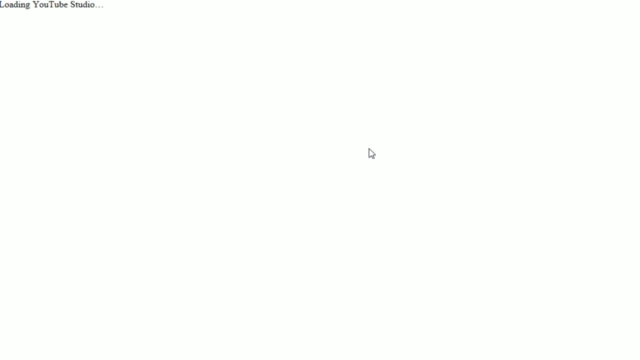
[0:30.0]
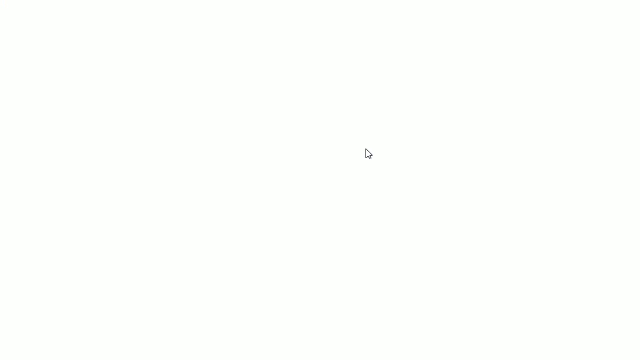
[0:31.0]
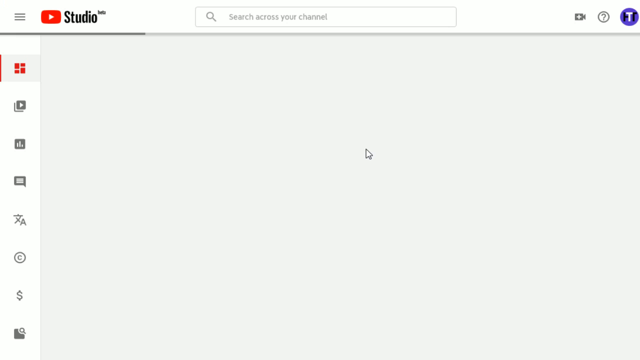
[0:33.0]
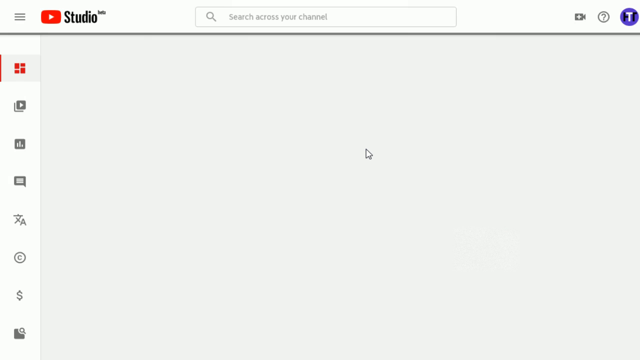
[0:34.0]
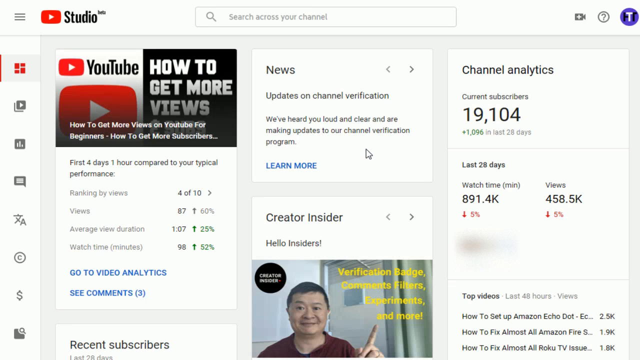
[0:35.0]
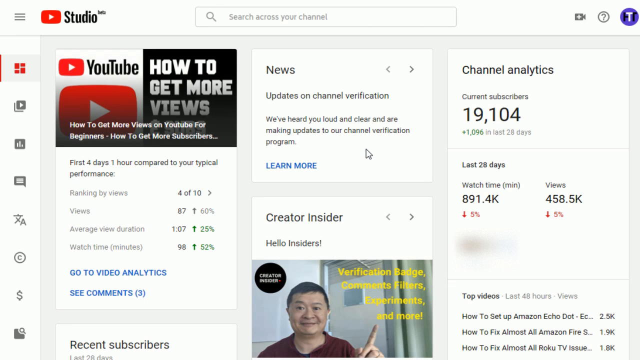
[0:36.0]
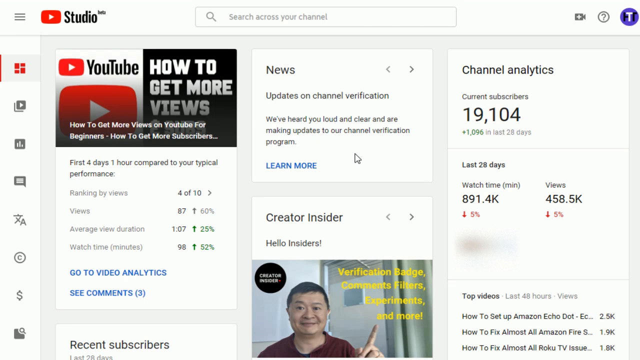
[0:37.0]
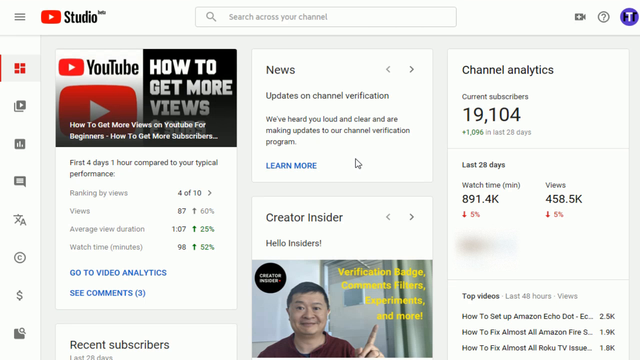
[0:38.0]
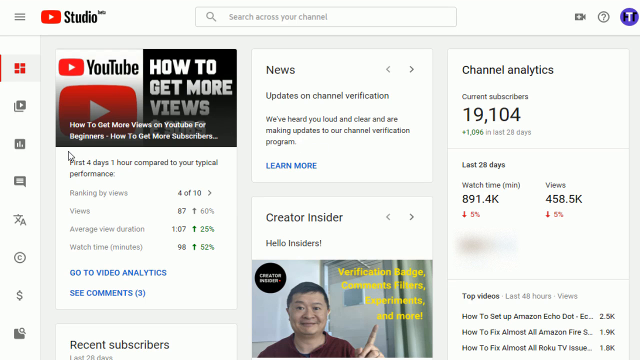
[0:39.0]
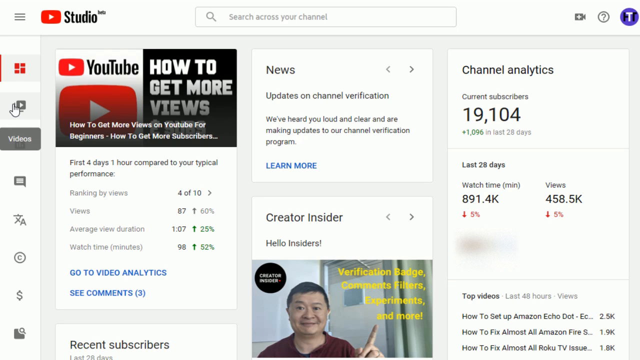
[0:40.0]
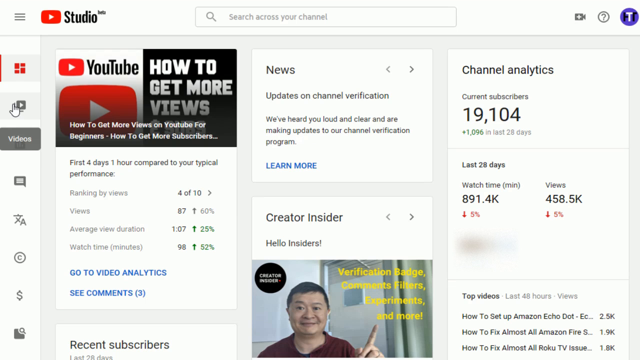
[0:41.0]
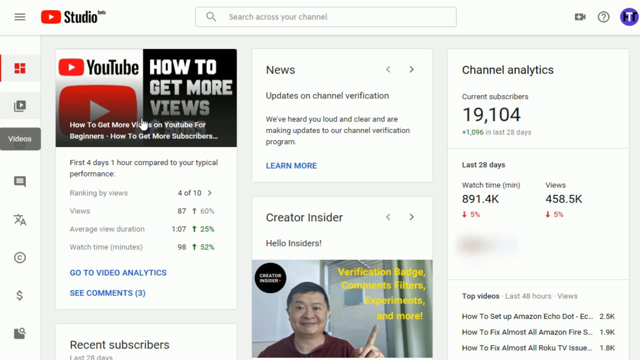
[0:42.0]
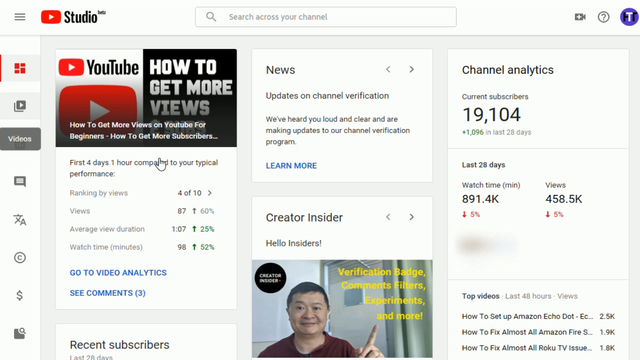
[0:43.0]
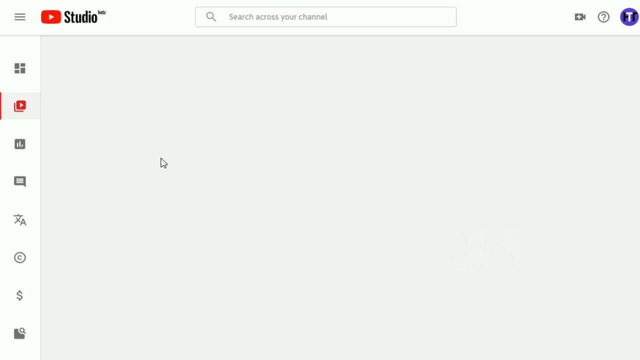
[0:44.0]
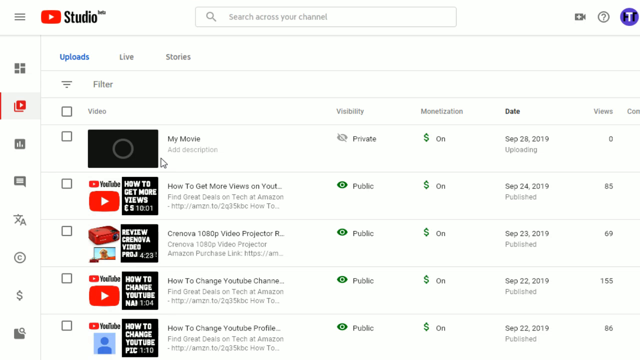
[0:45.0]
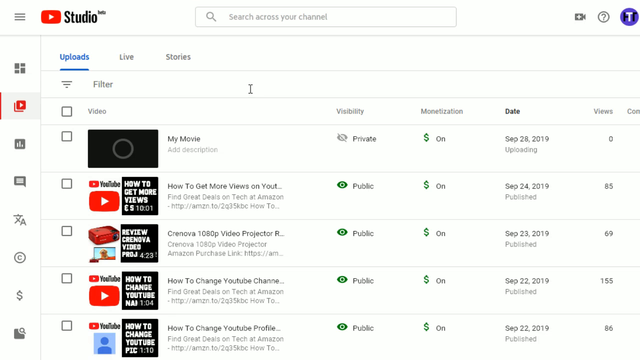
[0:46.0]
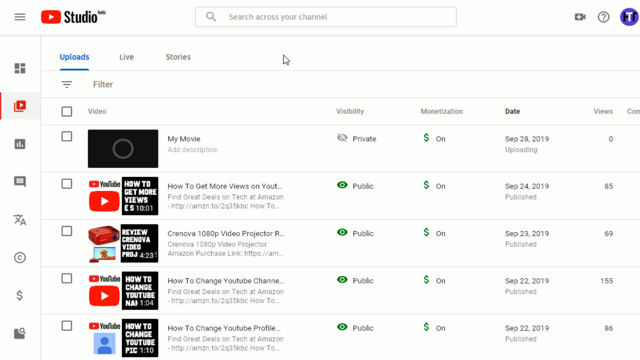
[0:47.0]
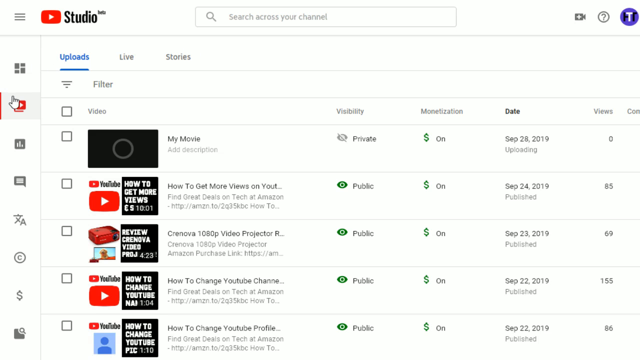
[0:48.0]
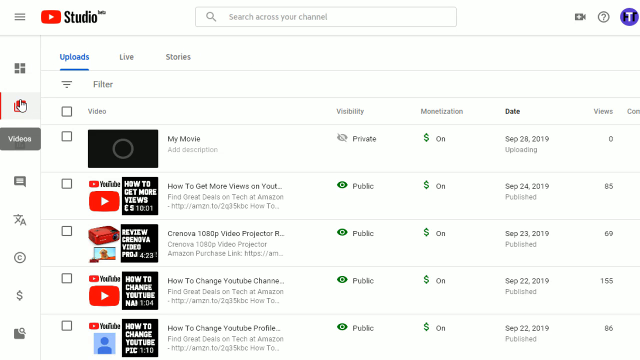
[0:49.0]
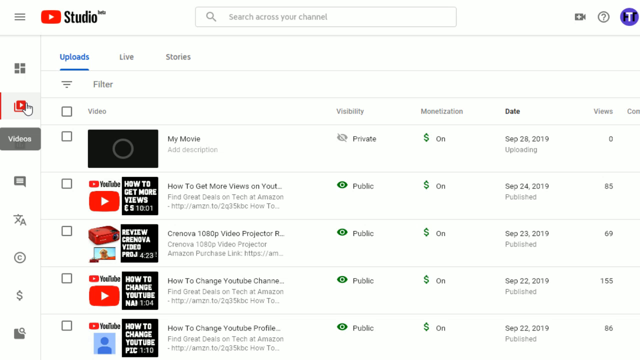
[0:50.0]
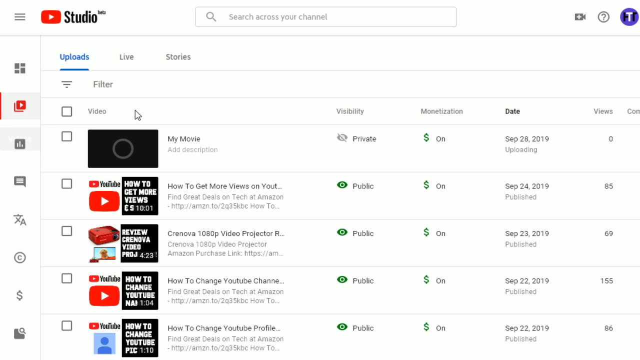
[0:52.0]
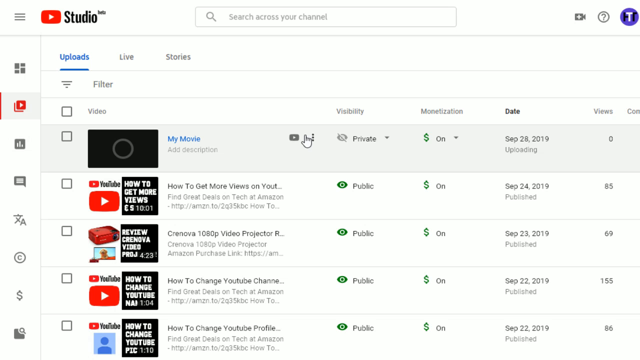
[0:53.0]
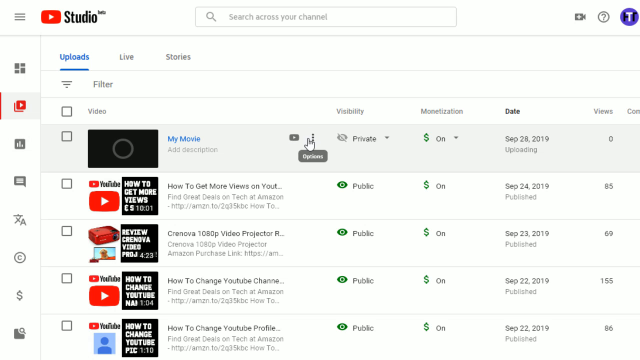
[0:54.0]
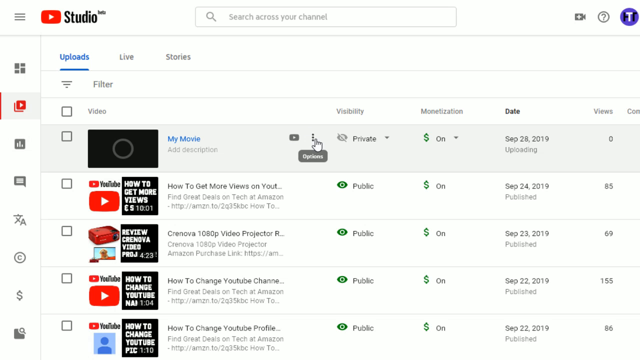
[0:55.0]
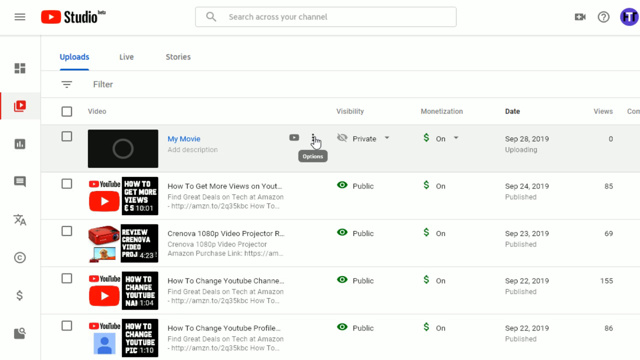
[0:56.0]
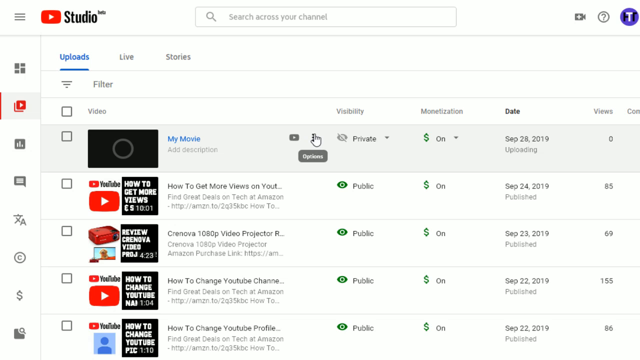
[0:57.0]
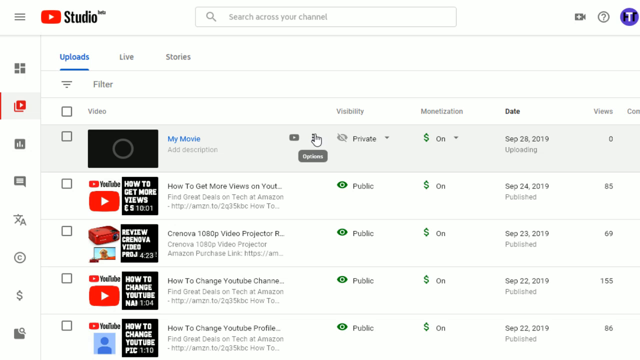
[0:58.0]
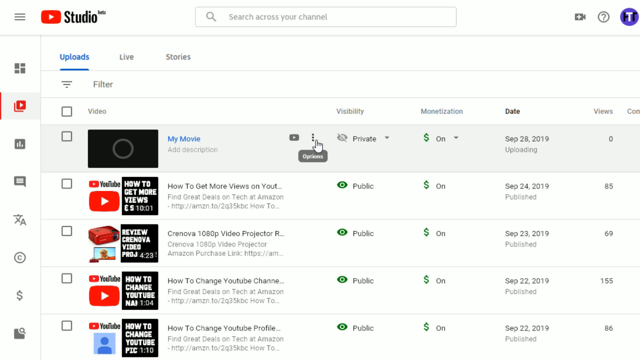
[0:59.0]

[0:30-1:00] The white YouTube Studio loading screen continues until YouTube Studio loads, showing the channel analytics, including current subscribers, watch time, and views. The cursor hovers over to the videos section of the YouTube Studio dashboard and opens the uploads, which list videos with options for each one, including visibility, monetization, date, and views. The first video is a private video called My Movie, with a three-dot options icon next to it. The cursor hovers over this video and then over the three dots. No physical subjects are visible; the setting is the YouTube Studio videos page.